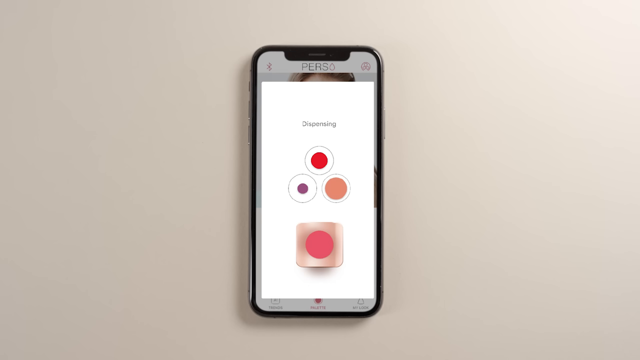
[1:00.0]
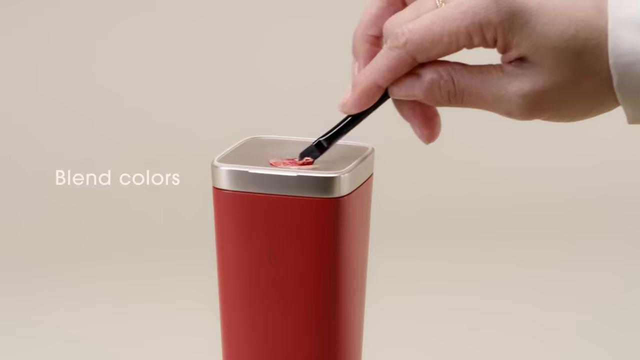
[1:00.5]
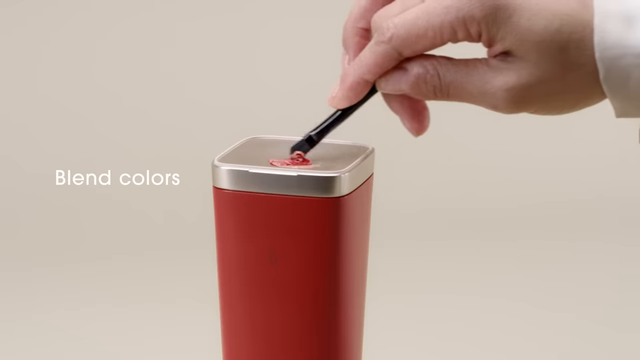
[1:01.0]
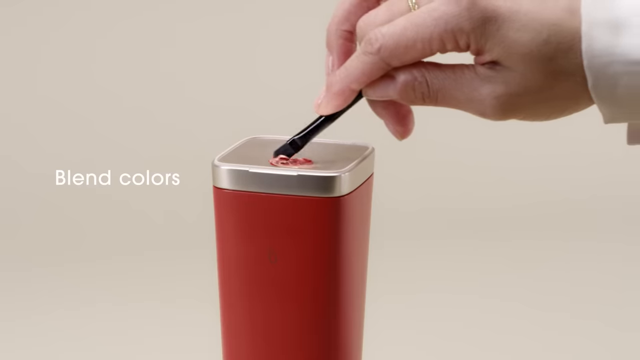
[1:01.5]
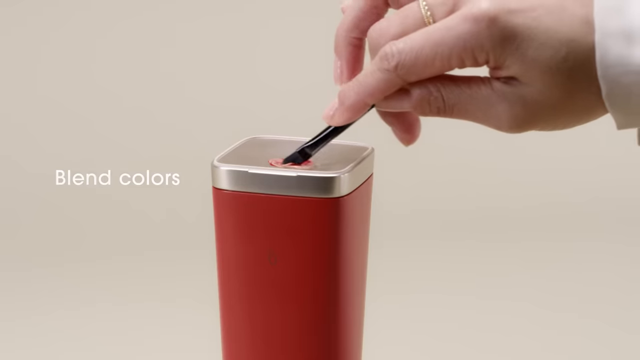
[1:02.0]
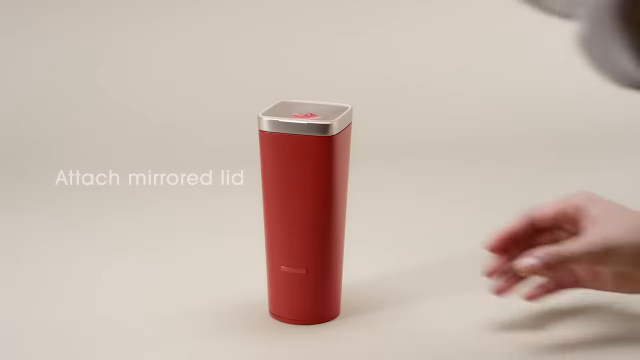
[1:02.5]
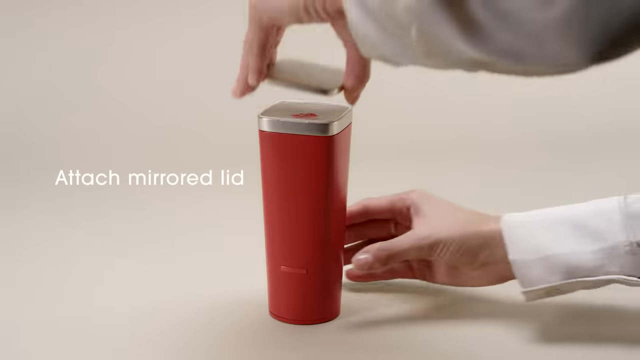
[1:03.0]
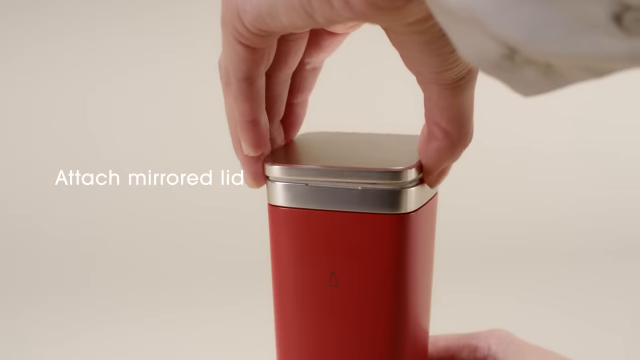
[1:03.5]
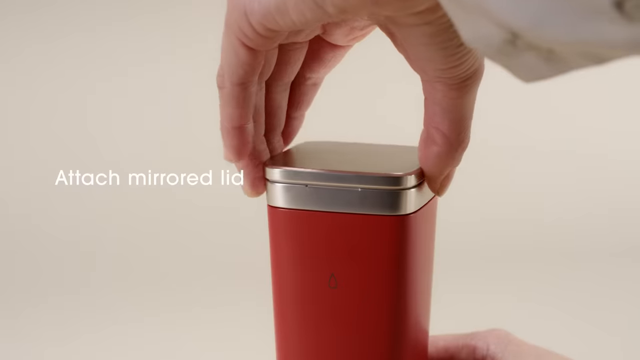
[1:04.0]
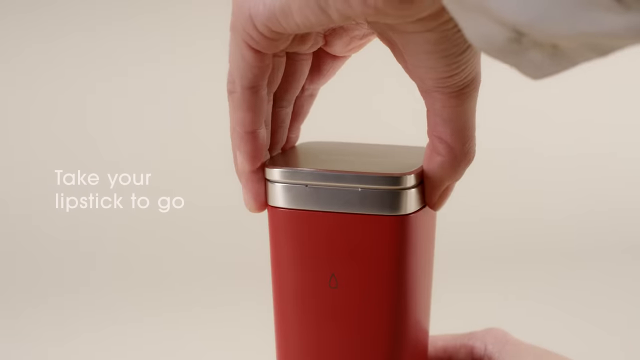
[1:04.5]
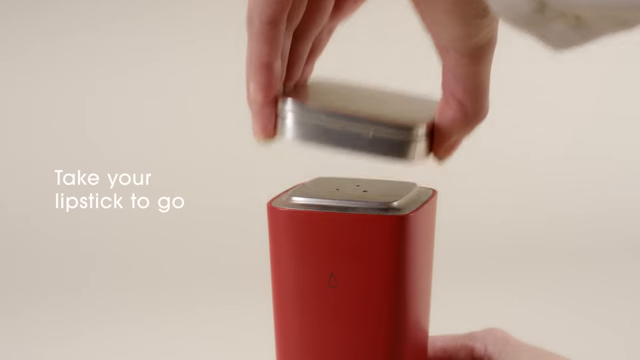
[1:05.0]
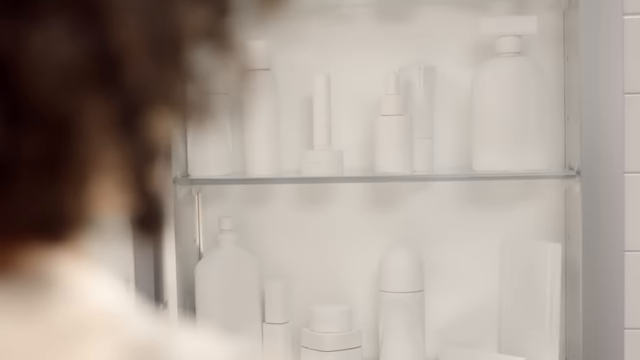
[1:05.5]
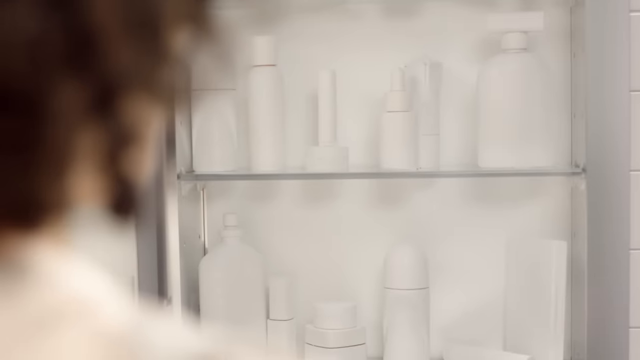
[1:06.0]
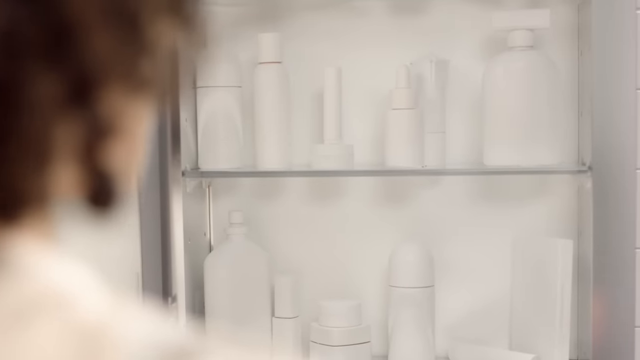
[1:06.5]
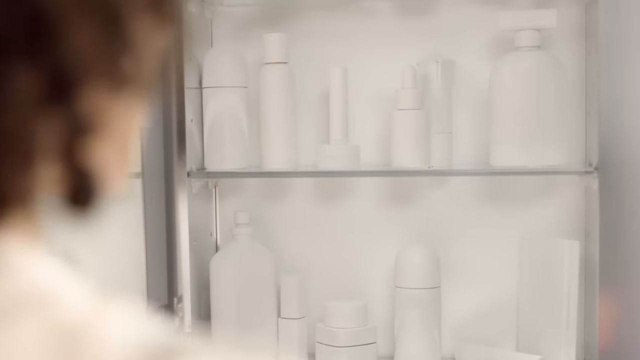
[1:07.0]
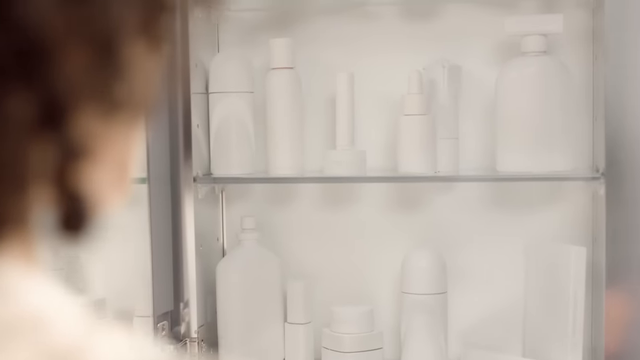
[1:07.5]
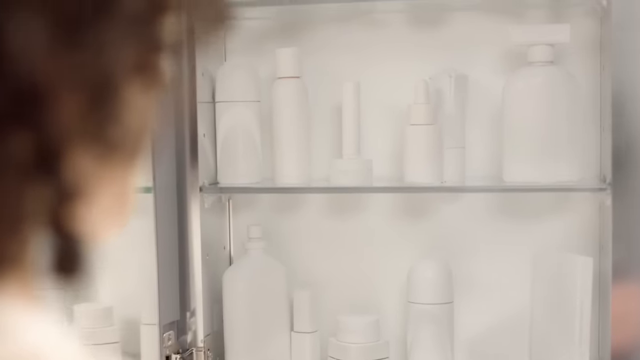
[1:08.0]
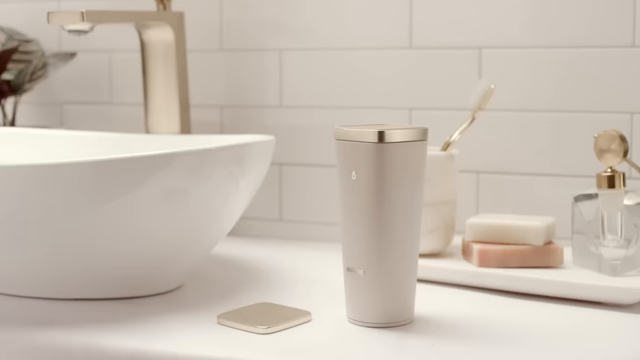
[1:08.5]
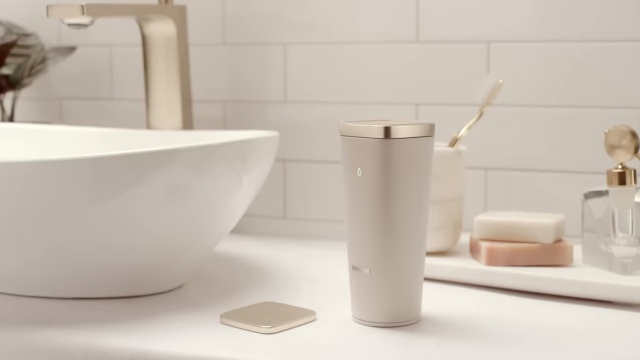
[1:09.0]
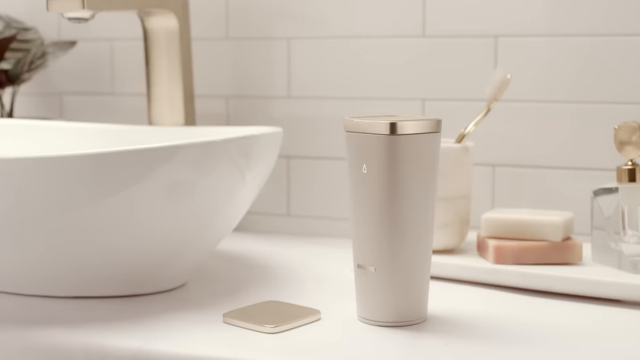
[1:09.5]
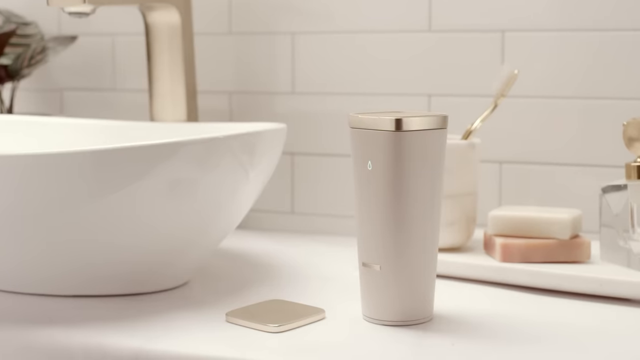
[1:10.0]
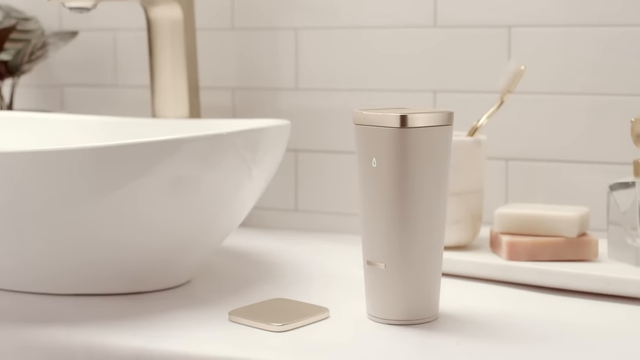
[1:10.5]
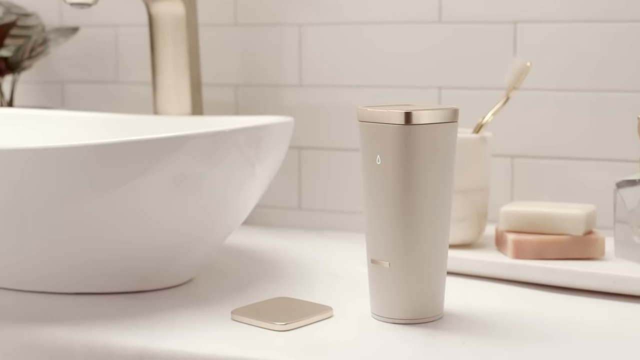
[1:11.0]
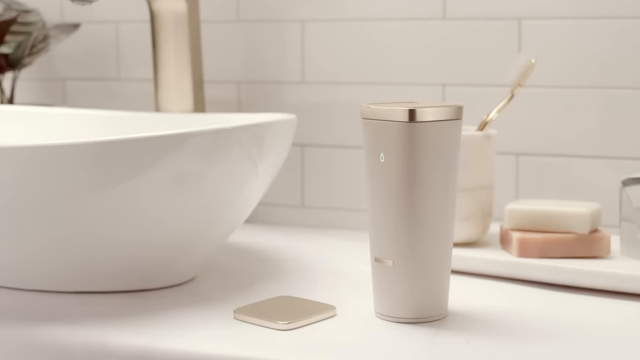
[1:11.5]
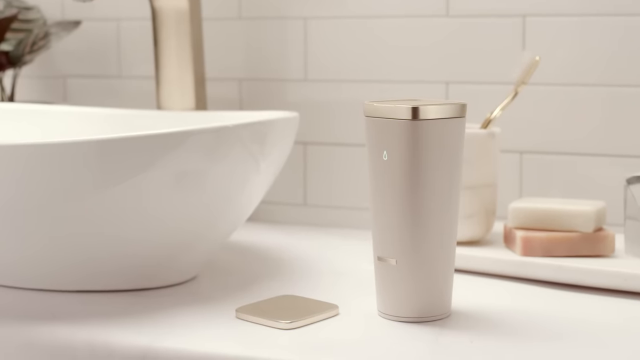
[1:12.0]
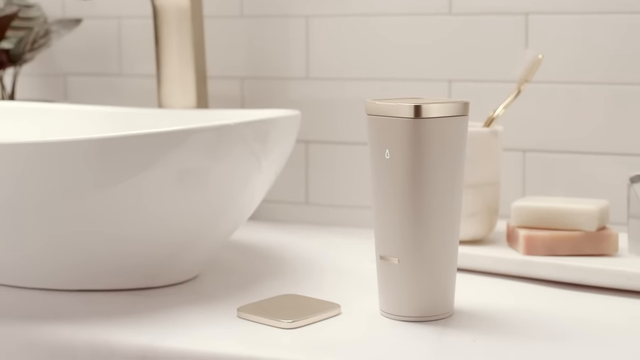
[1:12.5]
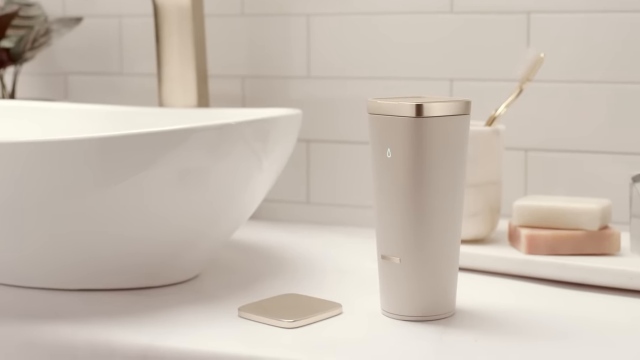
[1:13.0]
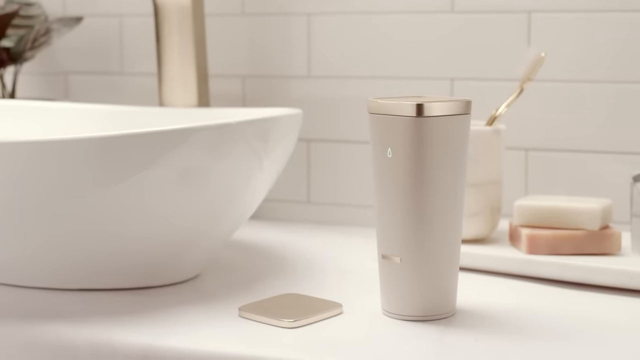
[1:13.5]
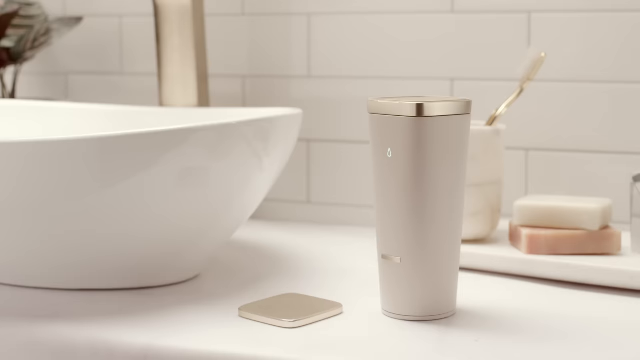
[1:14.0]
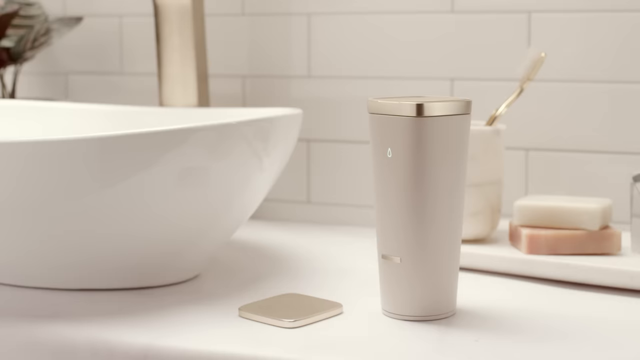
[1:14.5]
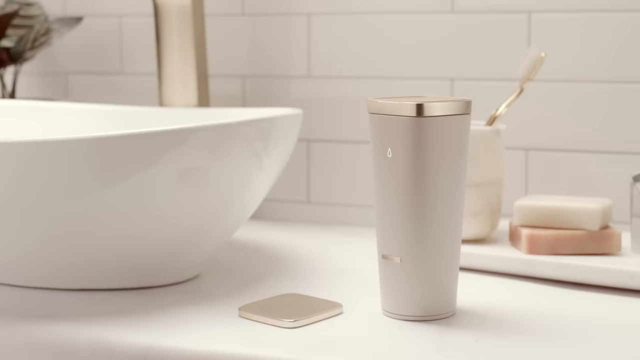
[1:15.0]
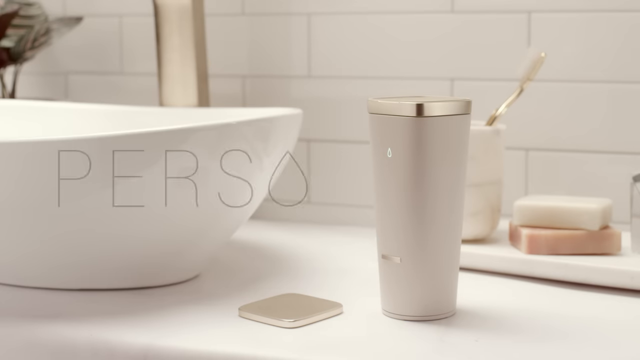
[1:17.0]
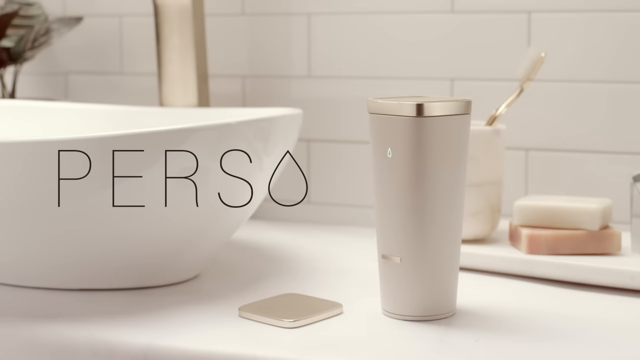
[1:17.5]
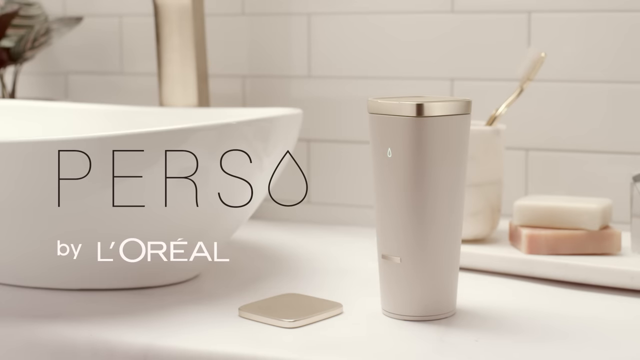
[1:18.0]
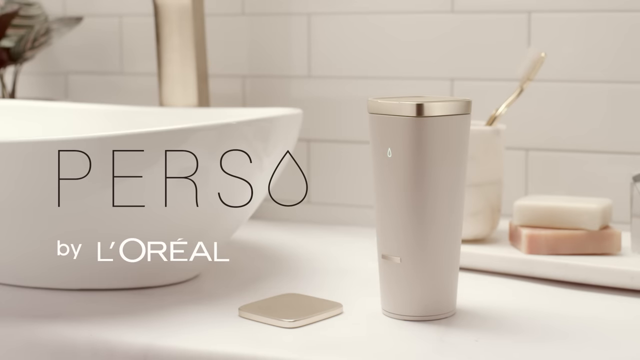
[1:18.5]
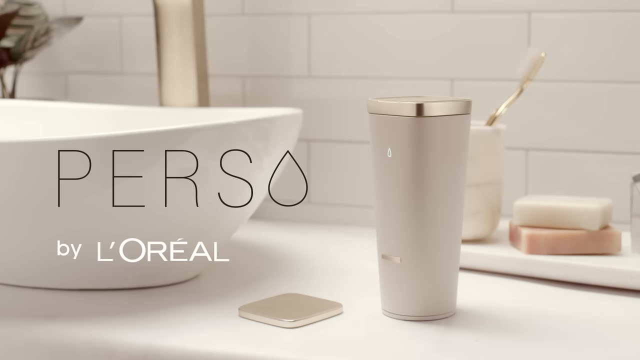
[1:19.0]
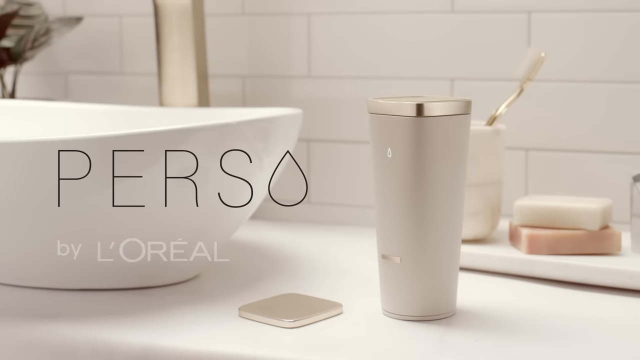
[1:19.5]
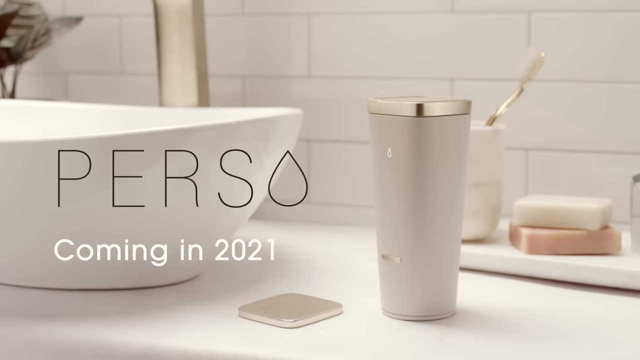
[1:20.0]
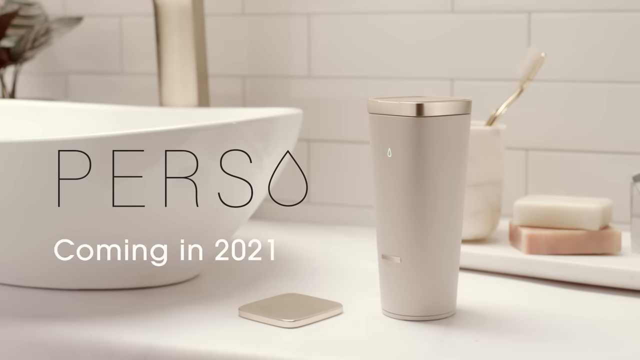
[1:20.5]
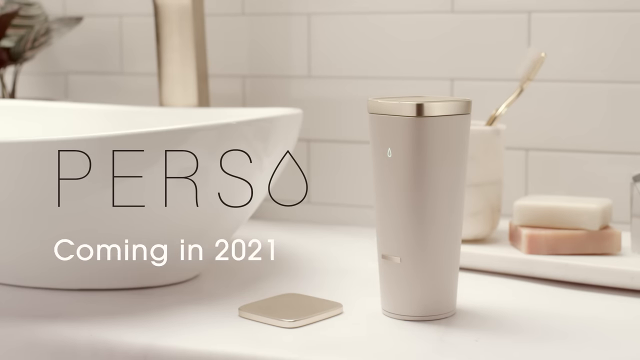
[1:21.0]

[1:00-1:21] The young lady's hand blends a red colour on top of the product, and she then attaches a mirrored lid on top of it with her left hand, with text reading "take your lipstick on the go". The scene goes back to the lady opening her mirrored cabinet with the blank products inside, all looking very dull. Another transition shows the new product on the right-hand side, next to the sink; in the background are a couple of bars of soap, some perfume, what looks like a toothbrush, and a sink with a golden tap on the right-hand side. The camera slowly zooms in on the product and the lid, which apparently is also on the bathroom top. Text blends in slowly with the word "Perso" in black and then "by L'Oreal" in white, followed by text stating that the product is coming in 2001.